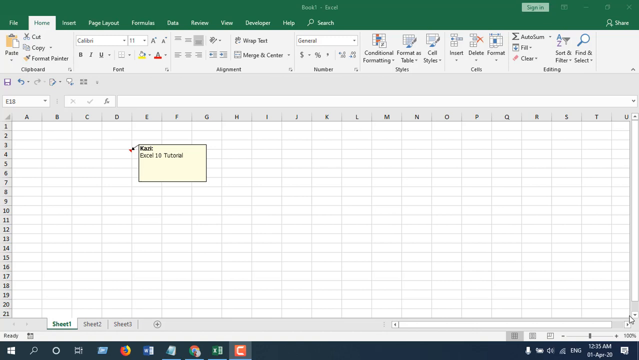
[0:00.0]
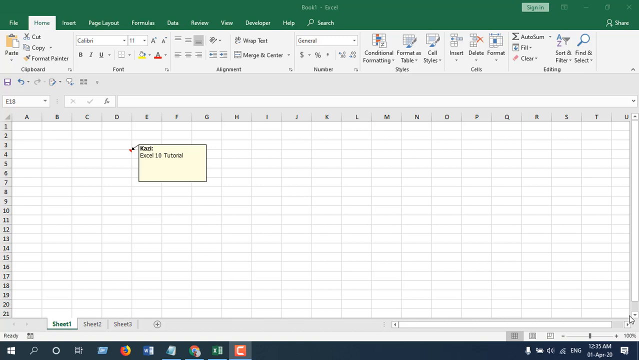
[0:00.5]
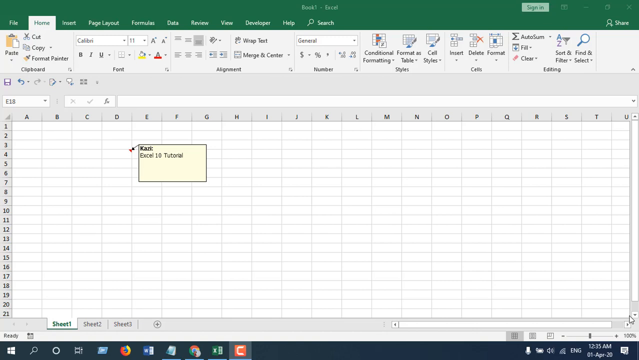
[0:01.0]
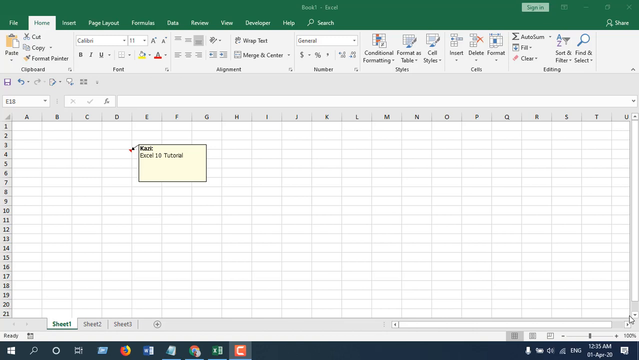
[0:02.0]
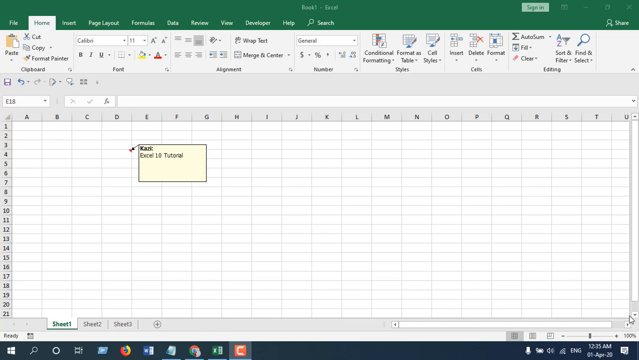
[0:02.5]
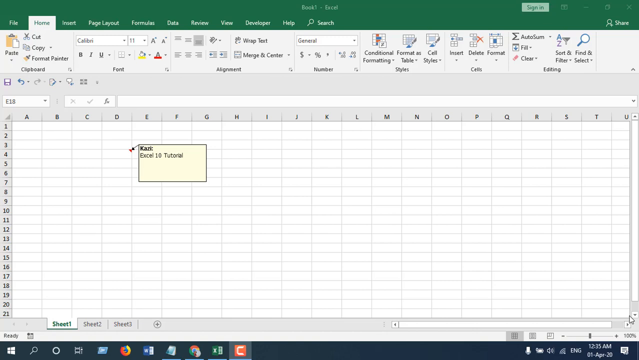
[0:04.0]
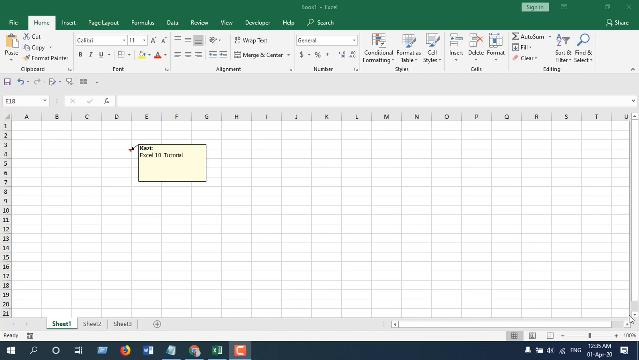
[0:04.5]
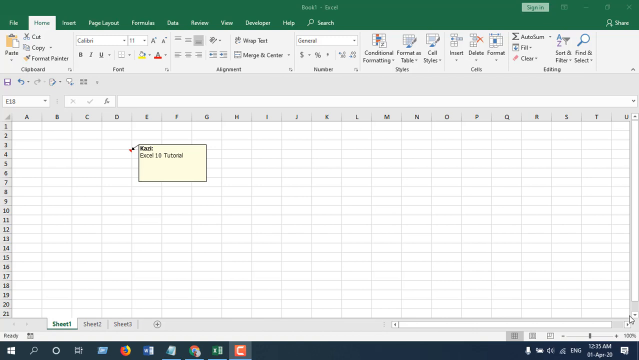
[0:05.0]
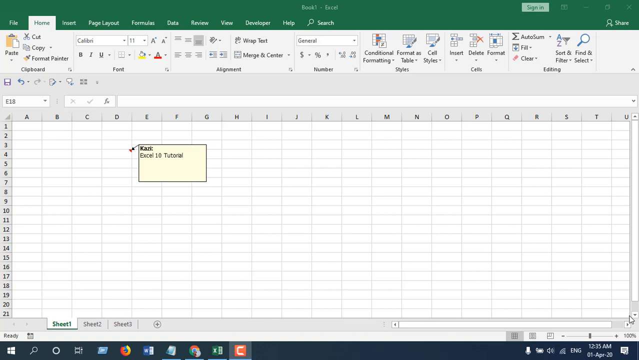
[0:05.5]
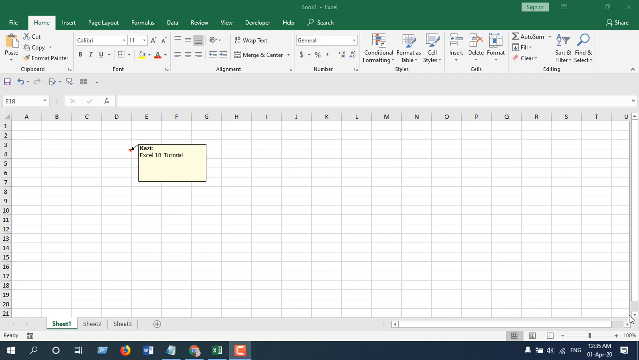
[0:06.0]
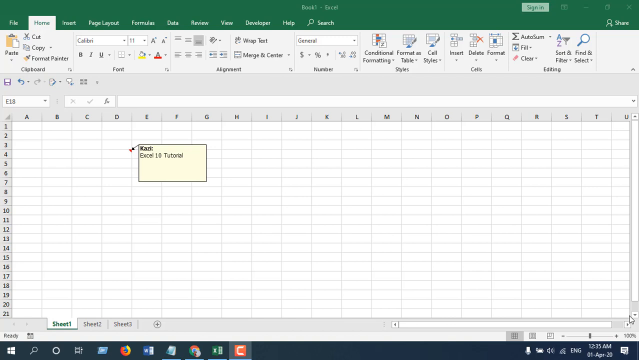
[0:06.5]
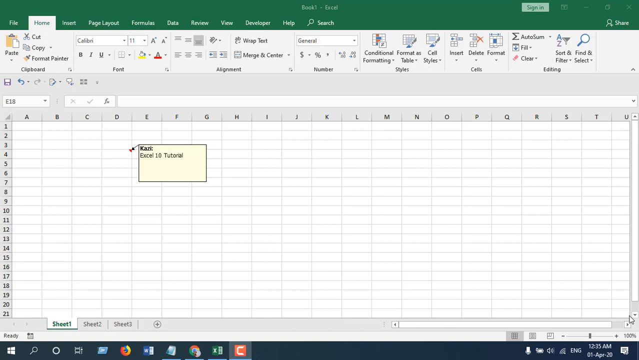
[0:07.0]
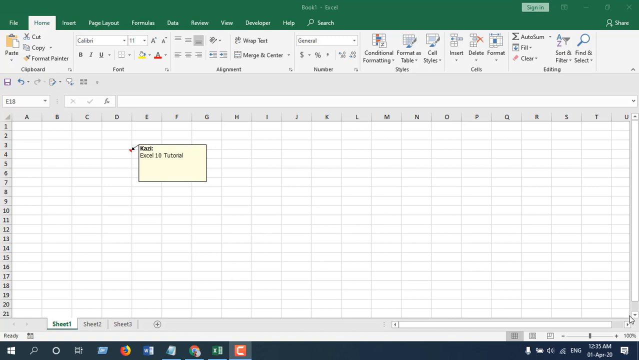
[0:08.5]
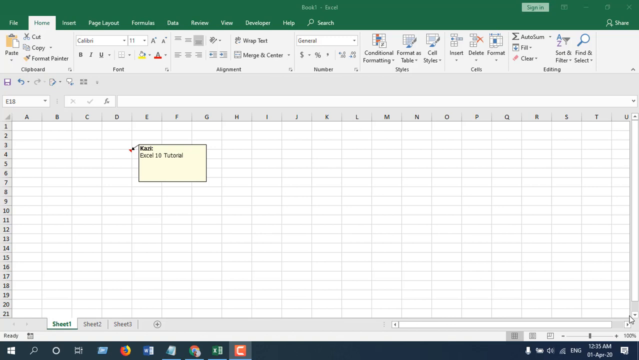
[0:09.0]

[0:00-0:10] The screen shows what looks like an Excel spreadsheet format. A green band runs across the whole top. A small pale yellow text box spans columns E through G and reads "Excel 10 Tutorial", so this is apparently a tutorial about Excel. Tabs and various icons are at the top, with the grid, letters across the top and numbers down the side. Nothing moves.